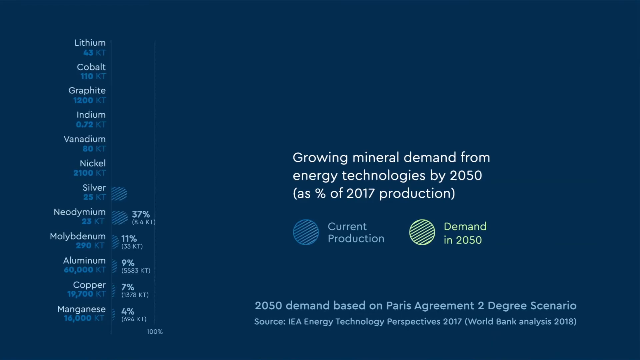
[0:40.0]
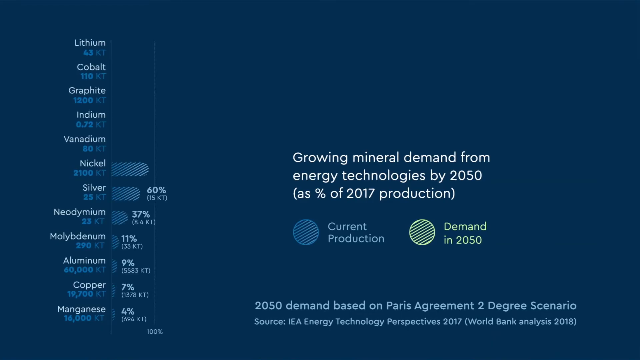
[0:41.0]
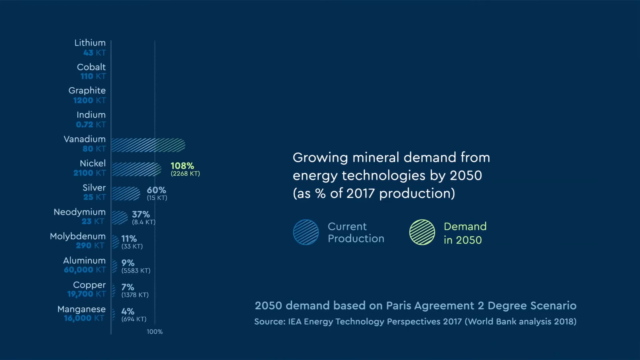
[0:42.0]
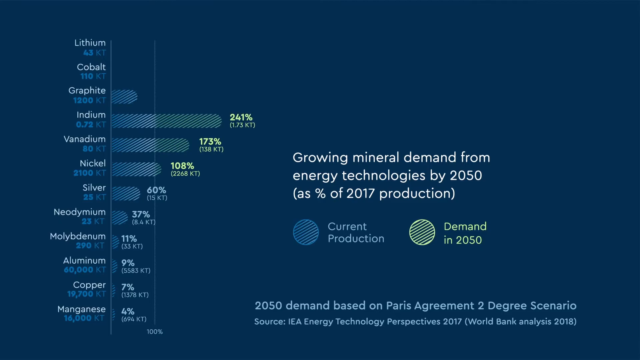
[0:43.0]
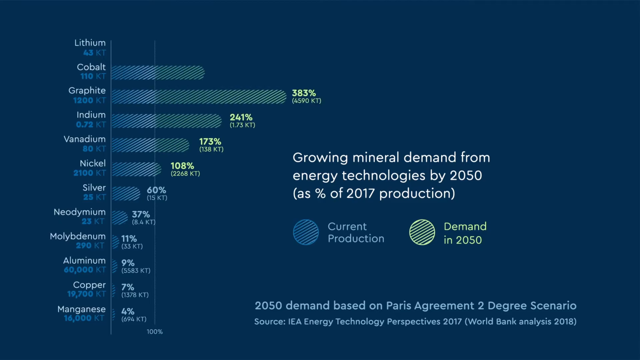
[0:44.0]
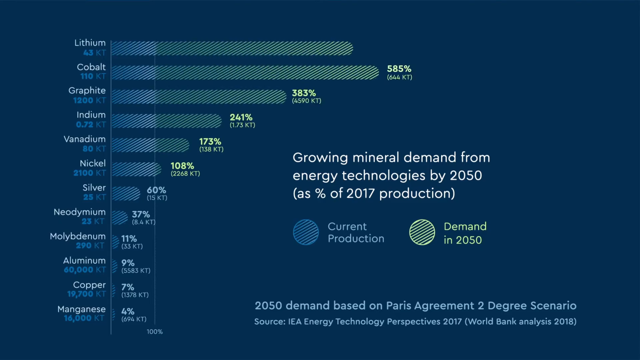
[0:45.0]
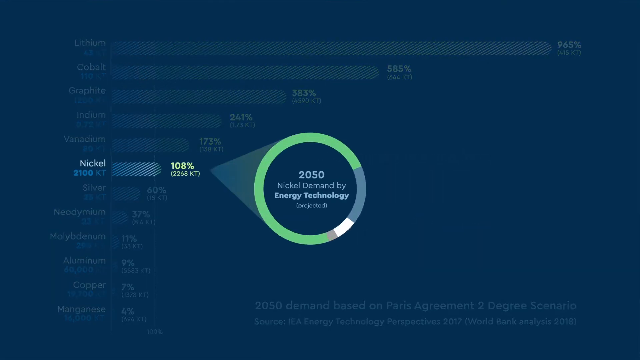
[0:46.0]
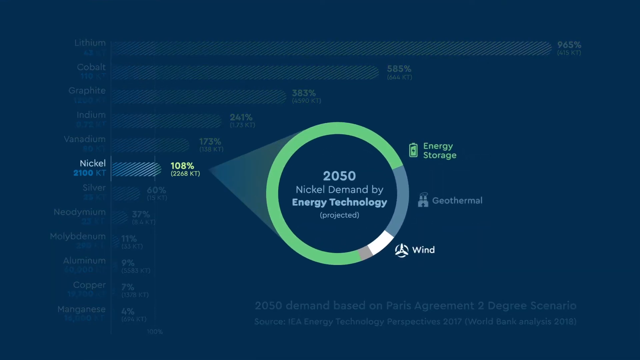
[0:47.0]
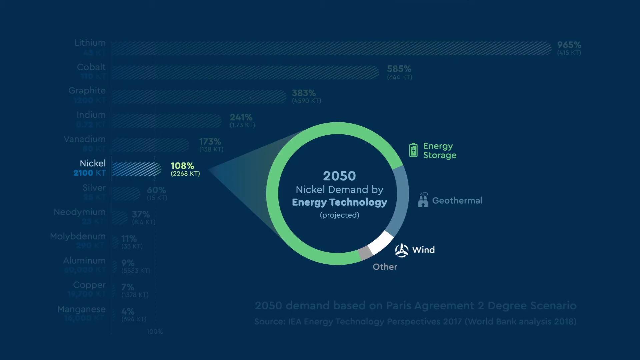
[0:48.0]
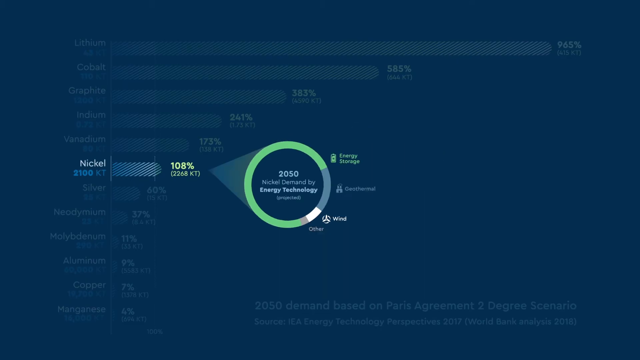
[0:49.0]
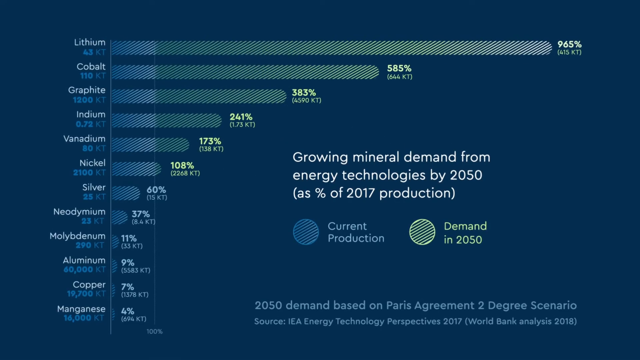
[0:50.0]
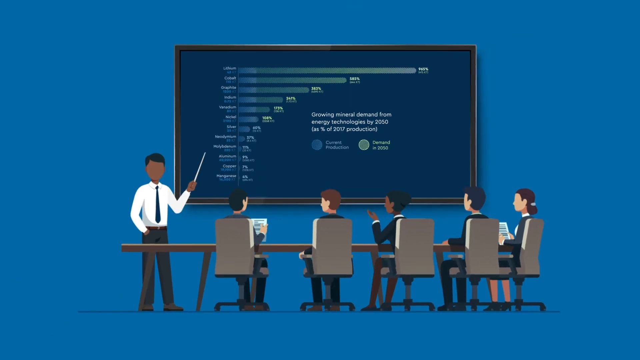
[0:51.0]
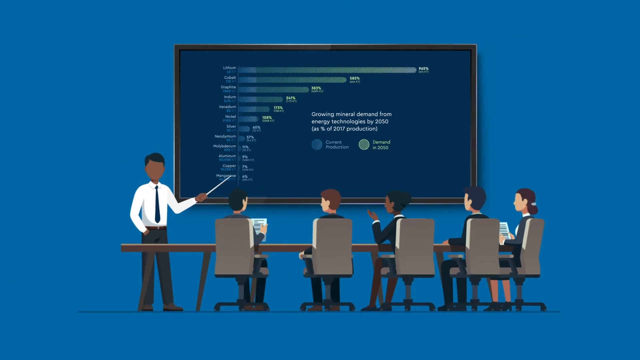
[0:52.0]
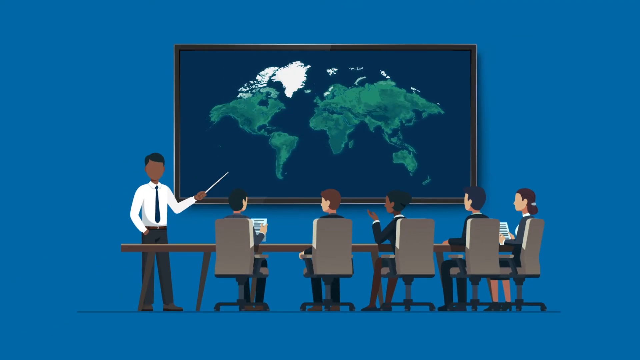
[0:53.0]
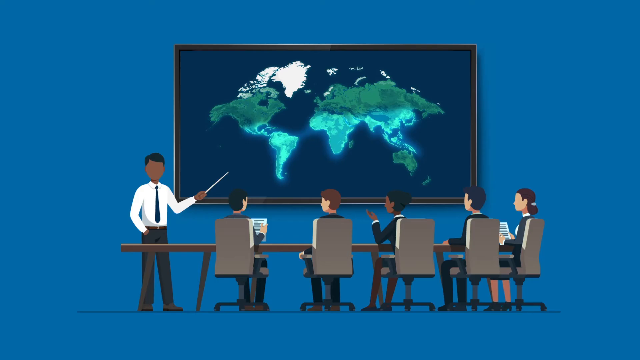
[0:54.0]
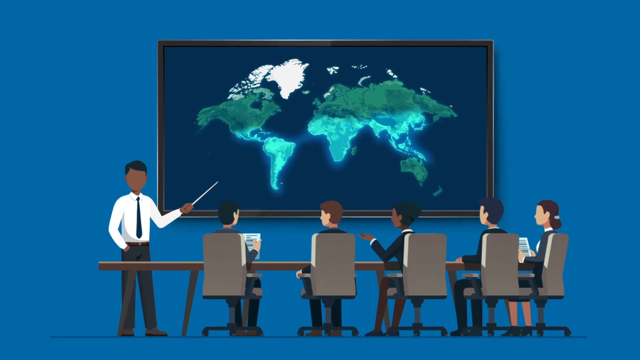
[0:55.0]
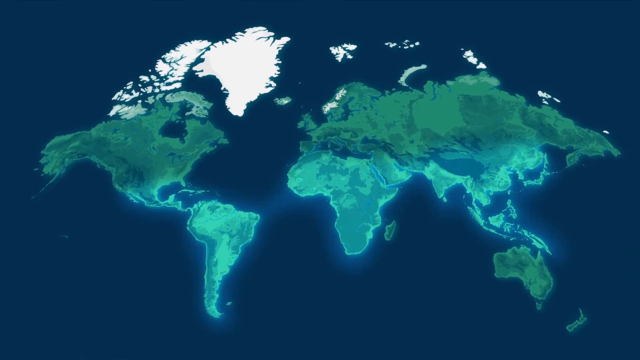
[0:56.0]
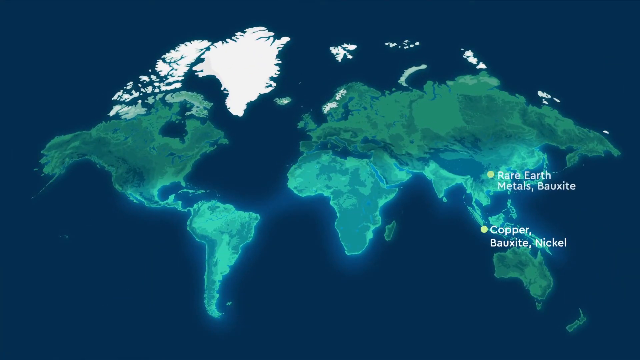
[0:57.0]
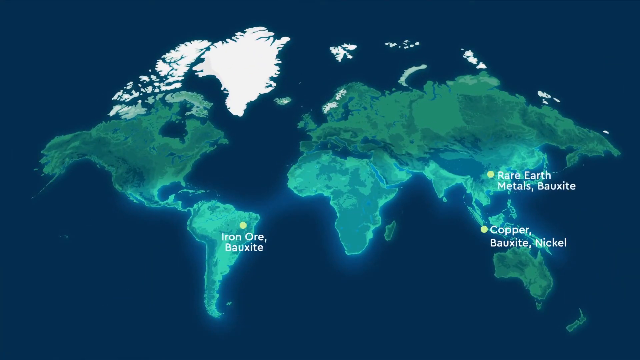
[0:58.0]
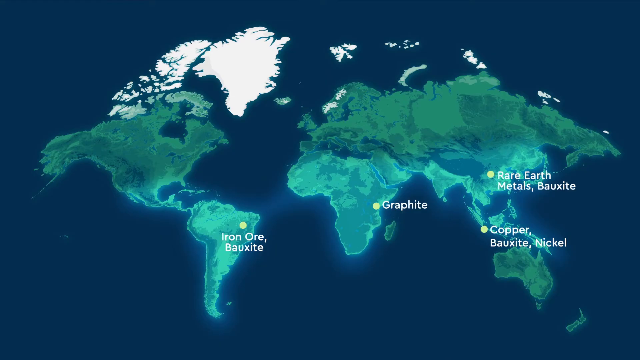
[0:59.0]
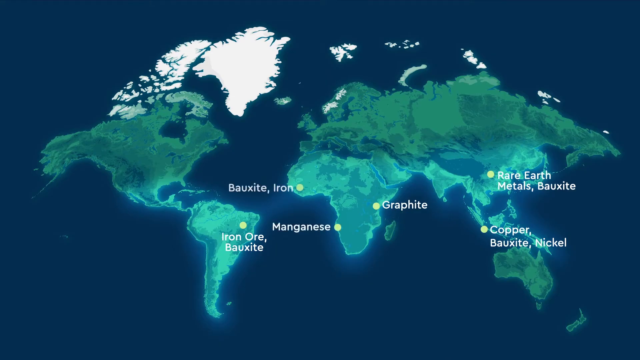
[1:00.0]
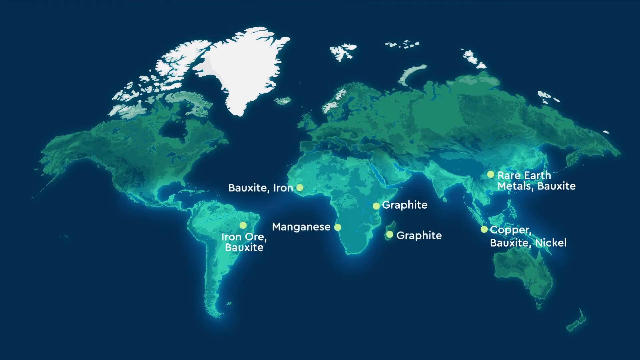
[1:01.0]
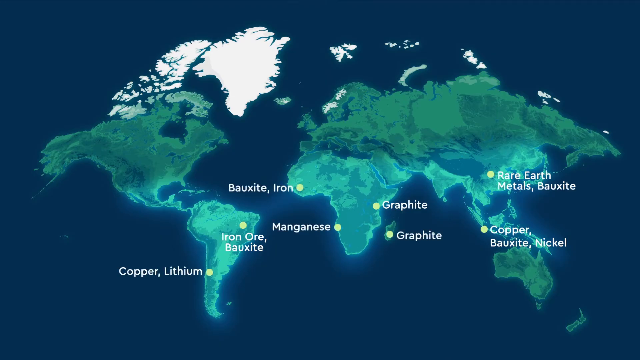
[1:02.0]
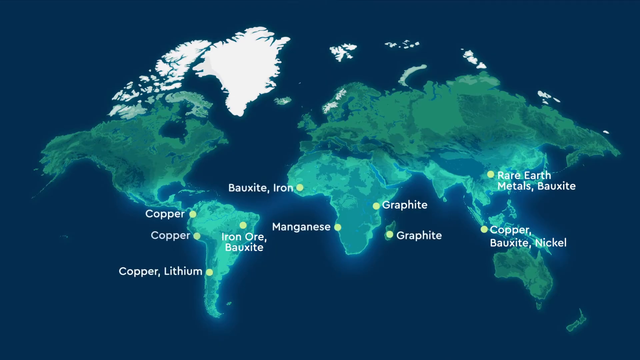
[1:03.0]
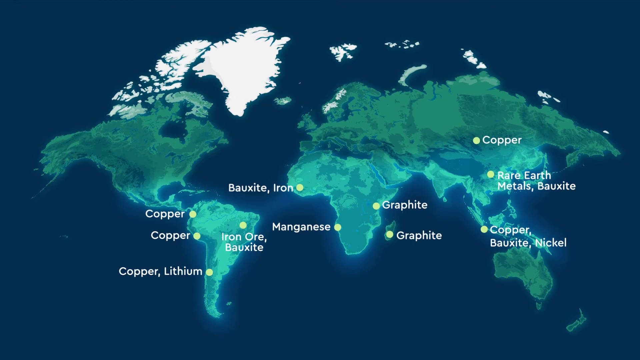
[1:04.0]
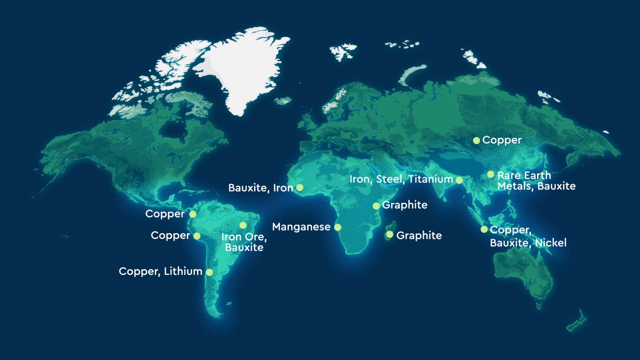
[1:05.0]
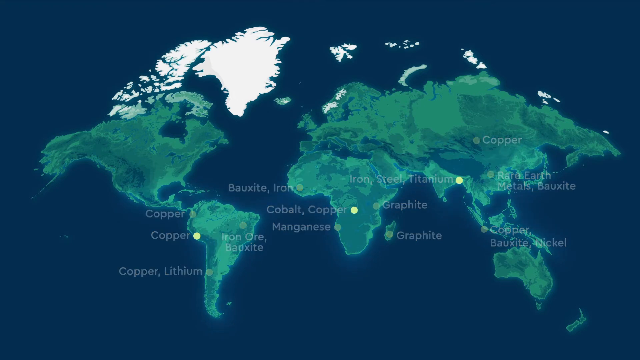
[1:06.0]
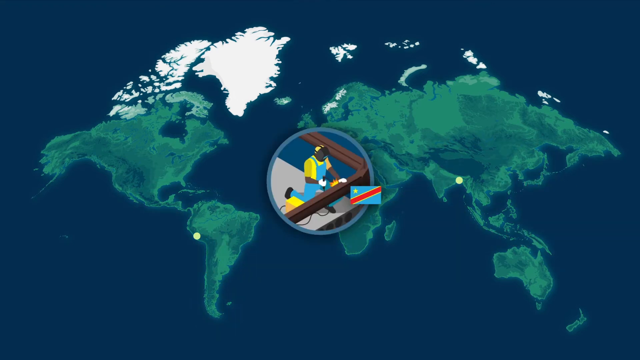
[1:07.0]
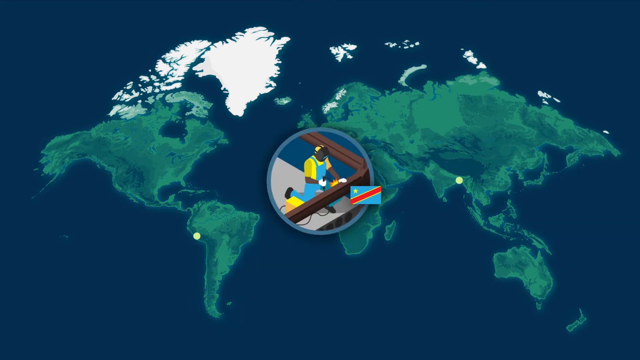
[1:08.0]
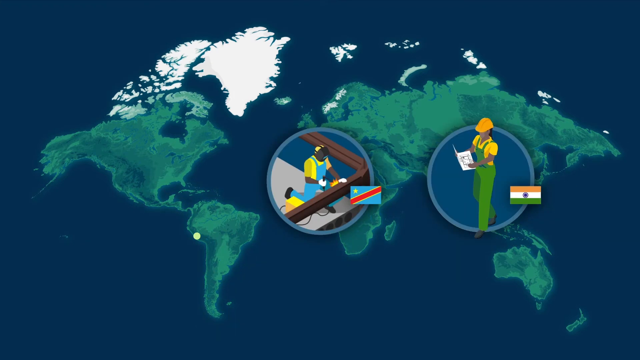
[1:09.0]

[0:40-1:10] The chart lists minerals such as lithium, cobalt, graphite, indium, vanadium, nickel, silver, neodymium, molybdenum, aluminum and copper with different percentages, under the text "growing mineral demand from energy technologies by 2050" and, in parentheses, "as percent of 2017 production." Beneath it, a blue circle is labeled "current production" and a yellow-green circle is labeled "demand in 2050." The graphs grow as the percentages appear: cobalt 585%, graphite 383%, indium 241%, vanadium 173%, nickel 108%, silver 60%, neodymium 37%, molybdenum 11%, aluminum 9% and copper 7%. The screen then shows 2050 with a circle around it and percentages for energy storage, geothermal, wind and other, titled "2050 nickel demand by energy technology," with nickel apparently at 108%. The chart is then shown again, along with other charts.